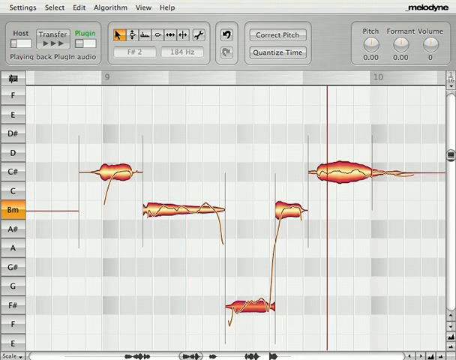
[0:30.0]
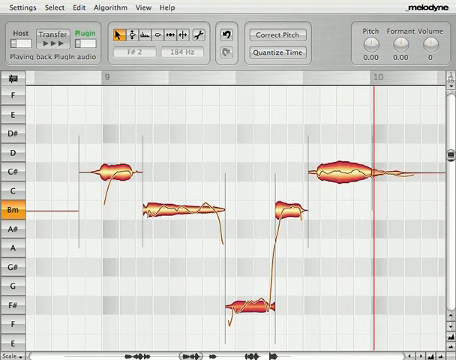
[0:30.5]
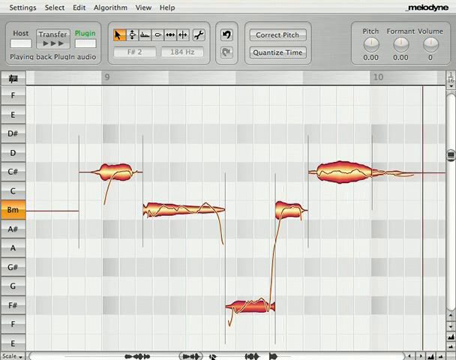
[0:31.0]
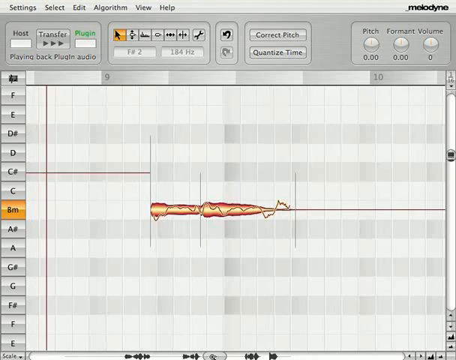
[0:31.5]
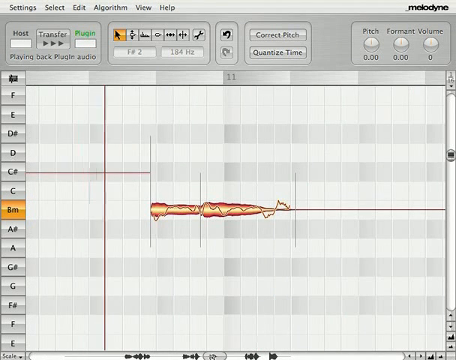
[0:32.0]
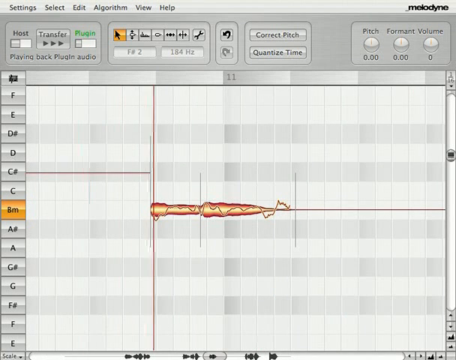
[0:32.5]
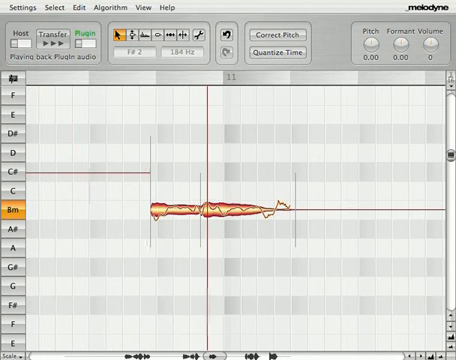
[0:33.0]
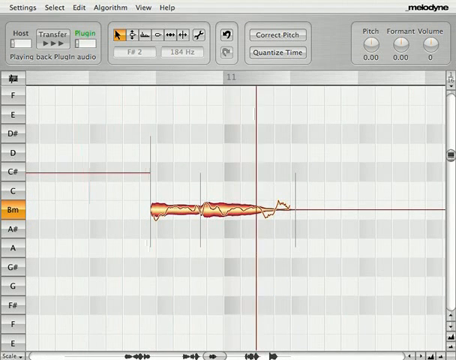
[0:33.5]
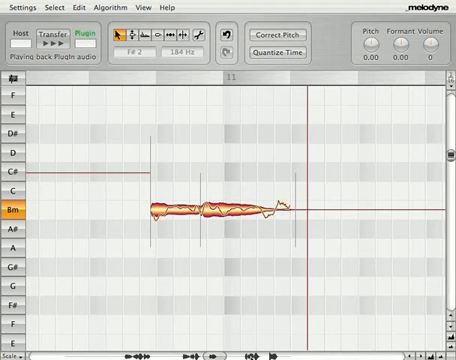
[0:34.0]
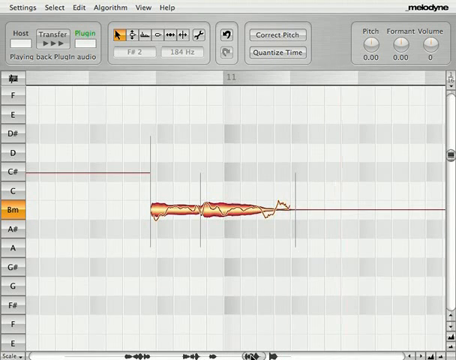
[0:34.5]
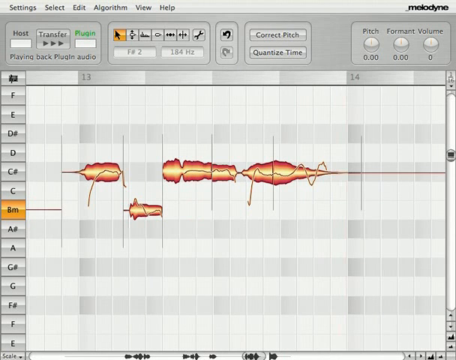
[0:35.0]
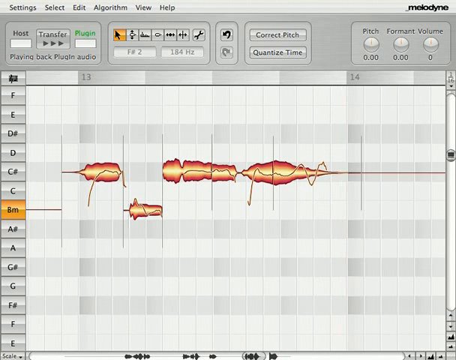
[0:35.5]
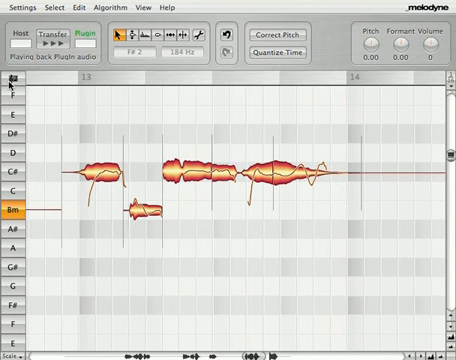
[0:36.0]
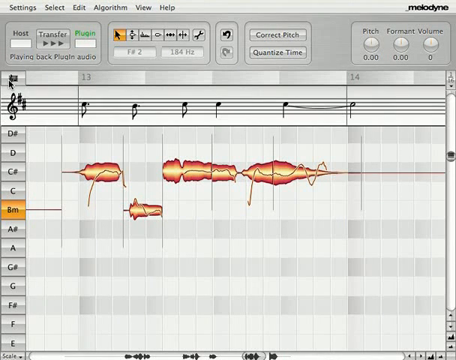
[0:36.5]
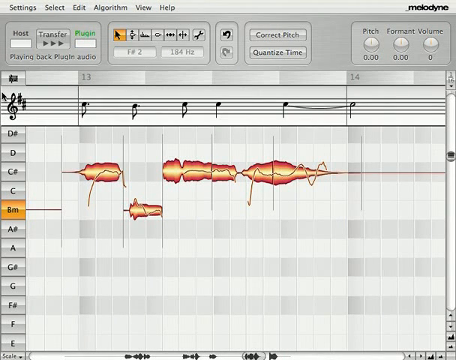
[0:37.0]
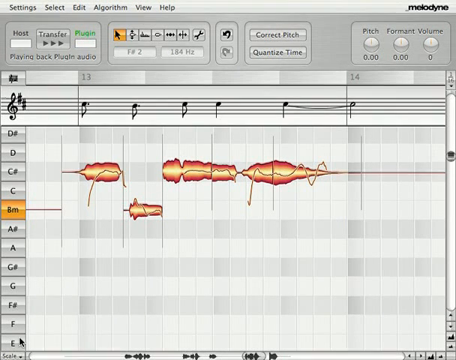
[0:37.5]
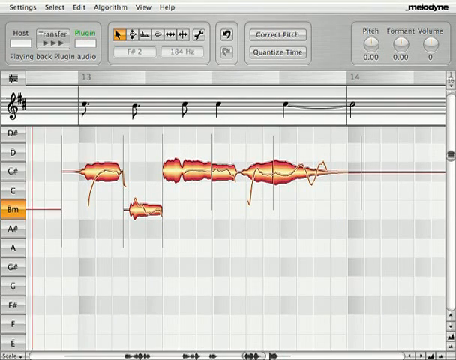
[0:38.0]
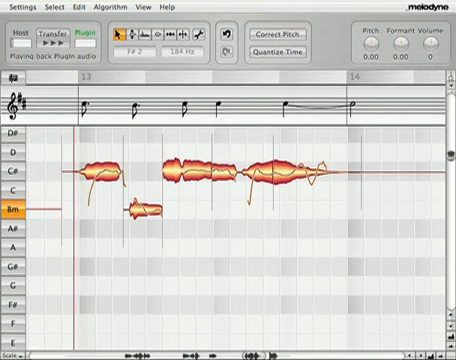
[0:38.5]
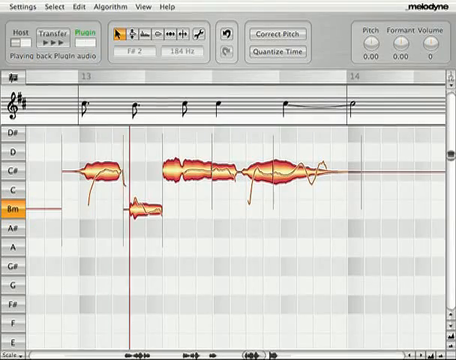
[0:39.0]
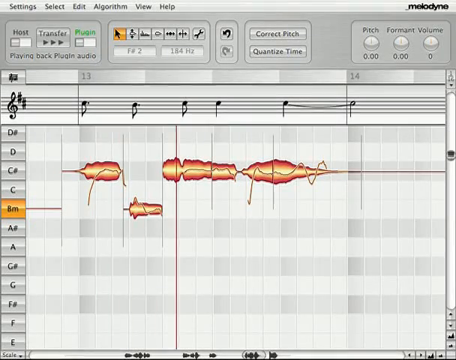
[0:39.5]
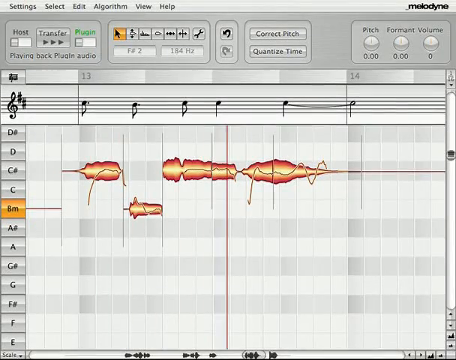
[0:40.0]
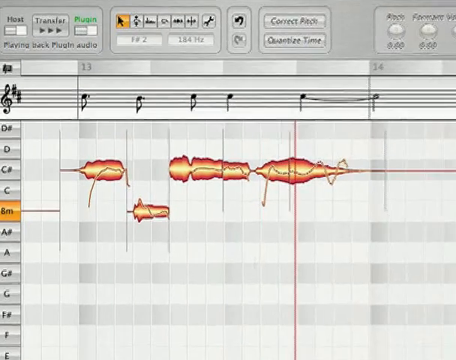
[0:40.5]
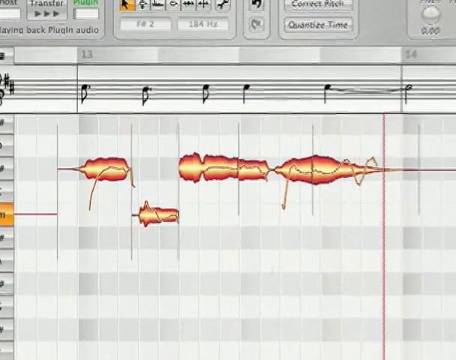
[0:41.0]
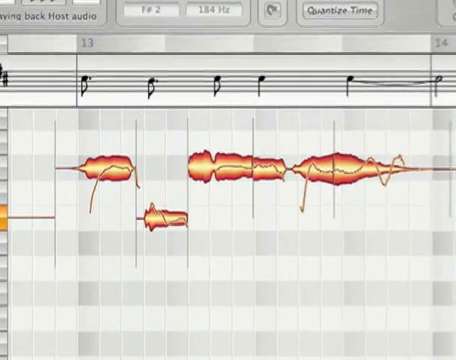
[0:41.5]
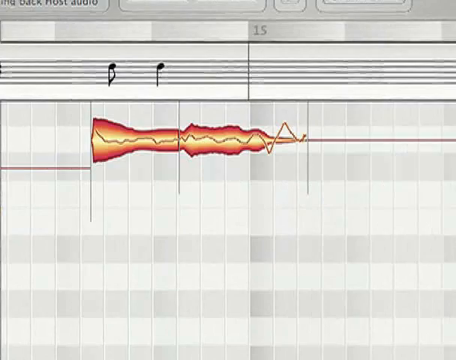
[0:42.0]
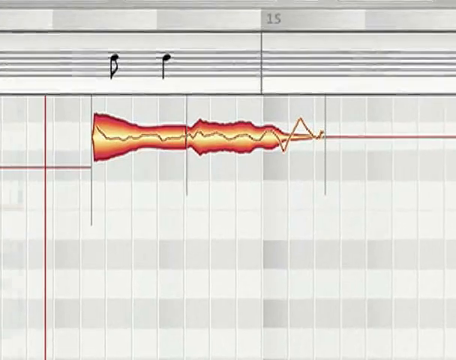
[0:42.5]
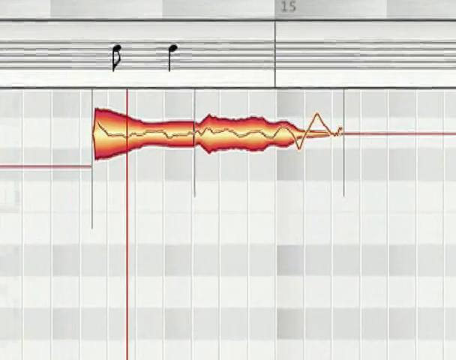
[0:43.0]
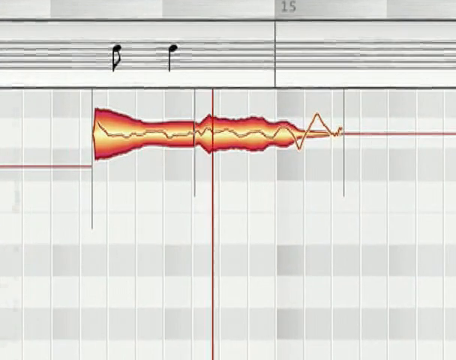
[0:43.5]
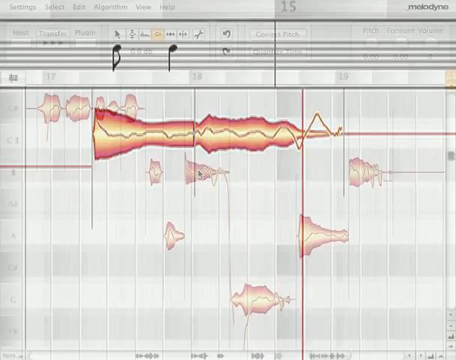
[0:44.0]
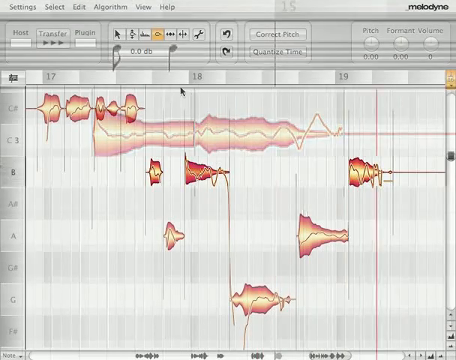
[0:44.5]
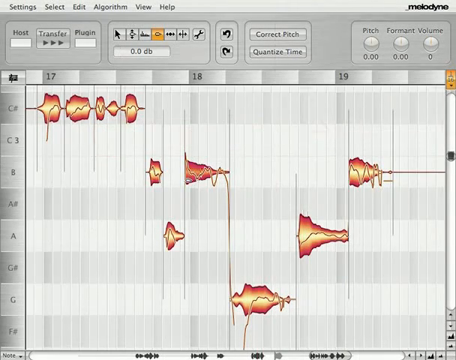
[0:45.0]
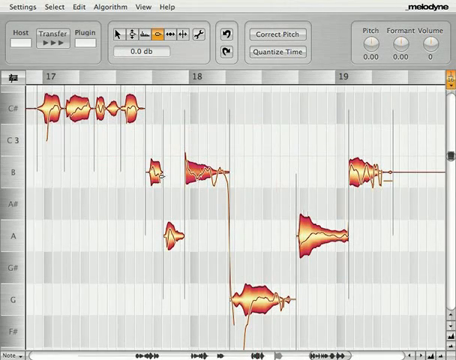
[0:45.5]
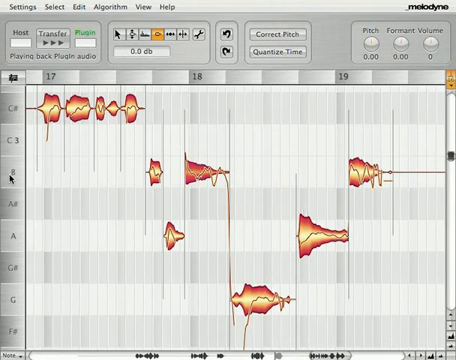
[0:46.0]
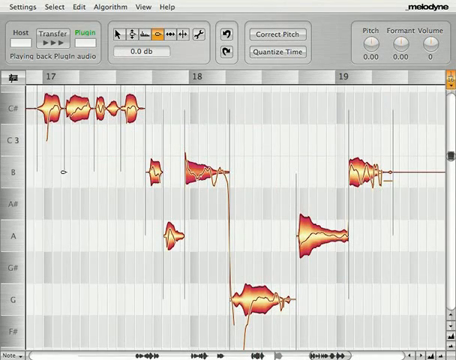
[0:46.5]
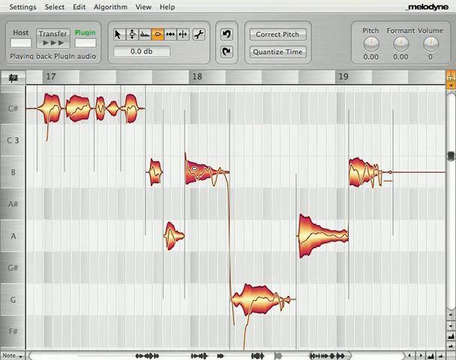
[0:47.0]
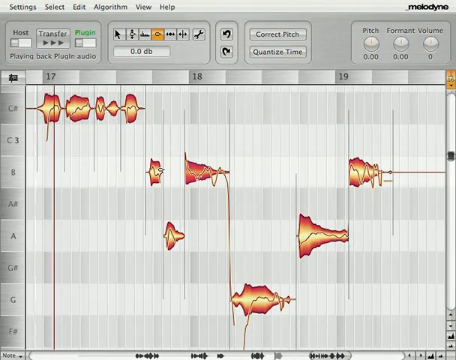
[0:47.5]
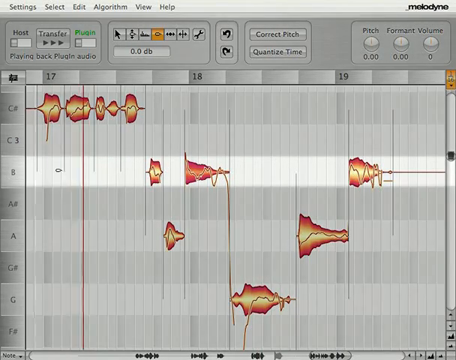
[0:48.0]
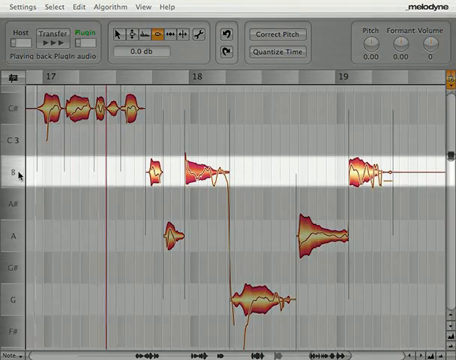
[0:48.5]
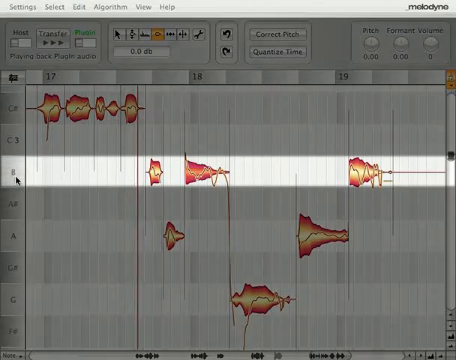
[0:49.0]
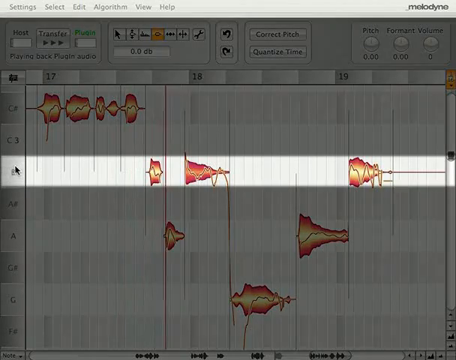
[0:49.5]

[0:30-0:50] Music and radio frequencies move across the screen, and a red line travels from the left side of the screen to the right. The video zooms in on one of the notes while the red line continues to run from left to right. The user highlights different areas of the musical notes. On the left side of the screen are the keys F, E, apparently D sharp, D, C sharp and C, and then a B key highlighted in a gold color. To the right of the keys, in the center of the screen, are most of the music frequency notes. In the upper right, the name Melodyne is visible; this is a plug-in.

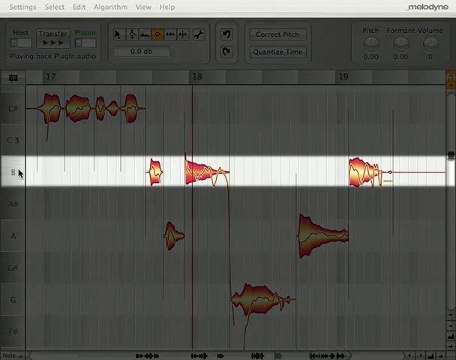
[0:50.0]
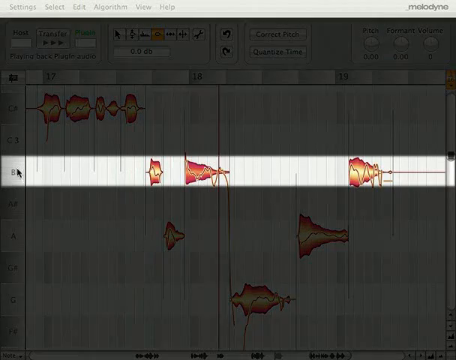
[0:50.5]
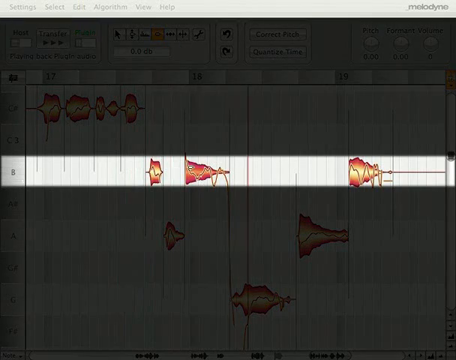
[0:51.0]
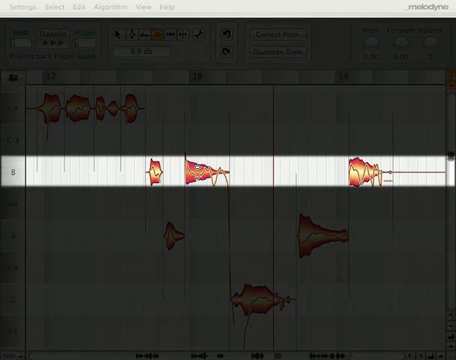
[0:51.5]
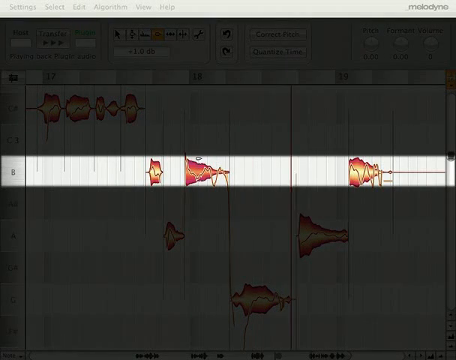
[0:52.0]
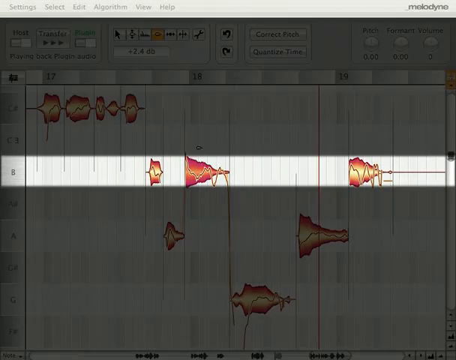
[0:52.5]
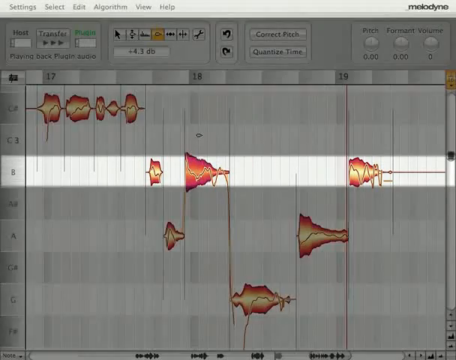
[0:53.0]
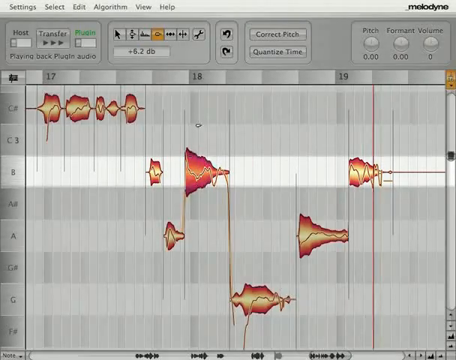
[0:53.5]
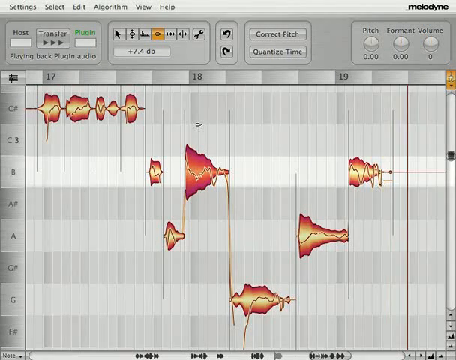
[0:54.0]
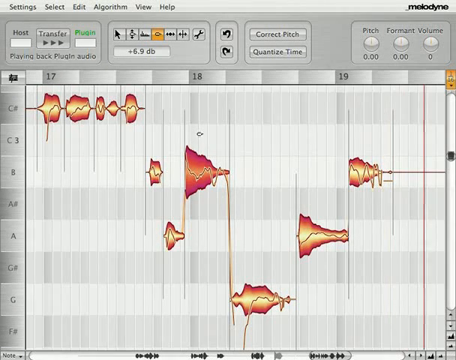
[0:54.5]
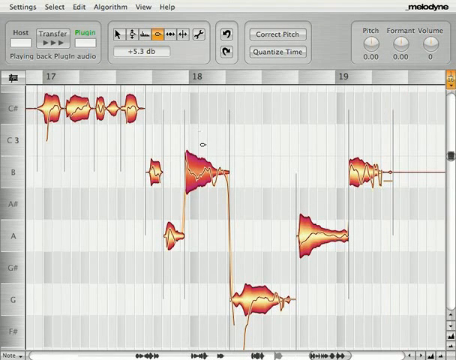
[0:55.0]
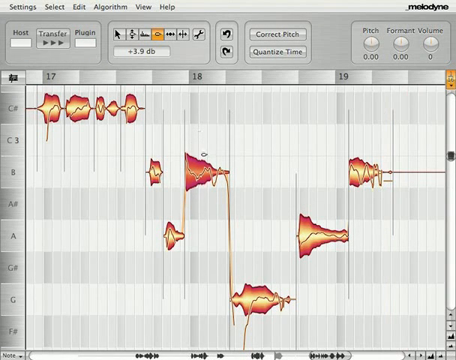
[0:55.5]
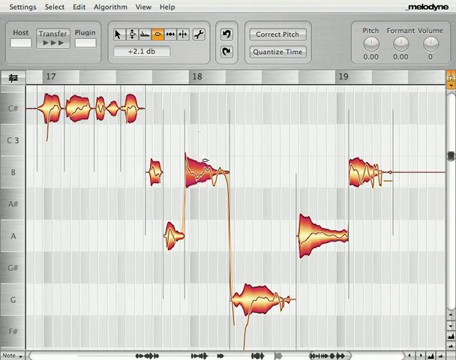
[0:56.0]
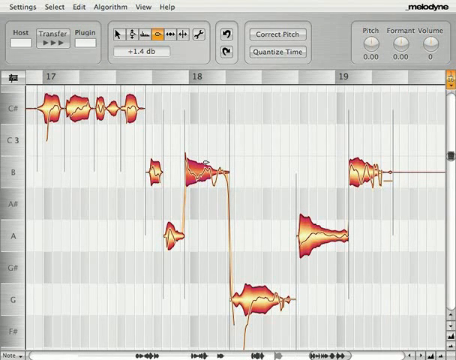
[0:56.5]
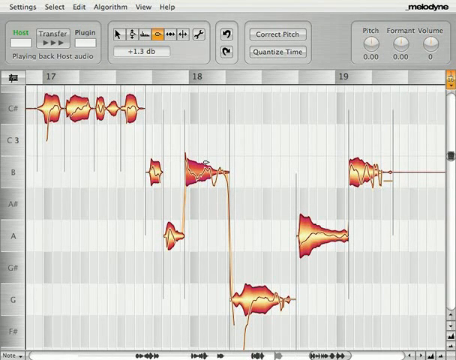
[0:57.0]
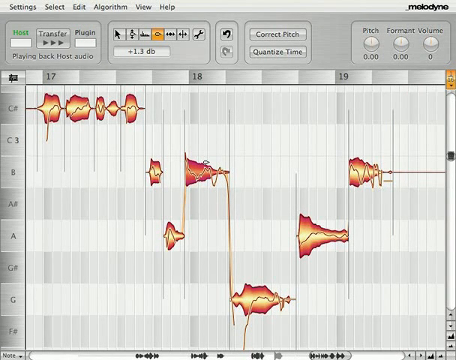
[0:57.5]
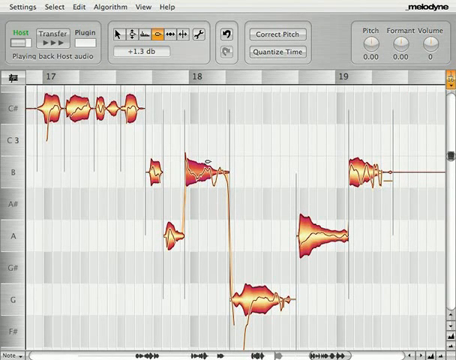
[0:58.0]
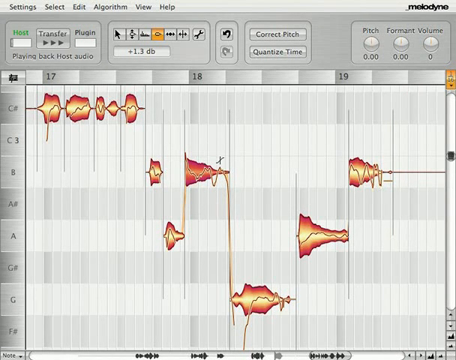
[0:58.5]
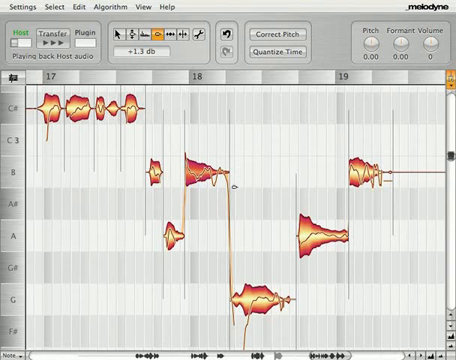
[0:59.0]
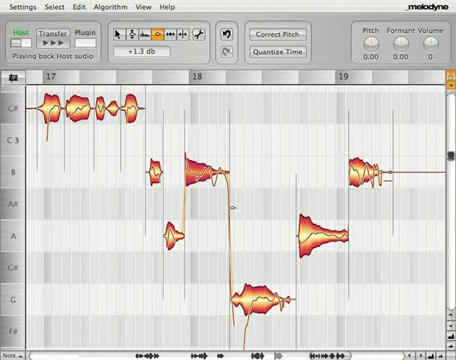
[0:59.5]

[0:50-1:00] Musical notes are highlighted in the music playback app as a white line moves across the center of the screen. The mouse pointer manipulates one of the notes in the center of the screen, underneath the number 18 column, widening the note where the B row meets the 18 column. In the upper right, the name Melodyne is shown.